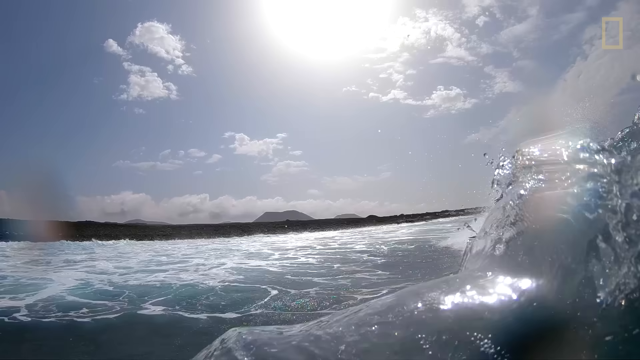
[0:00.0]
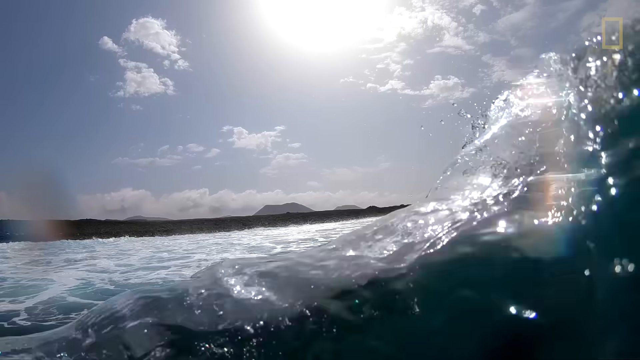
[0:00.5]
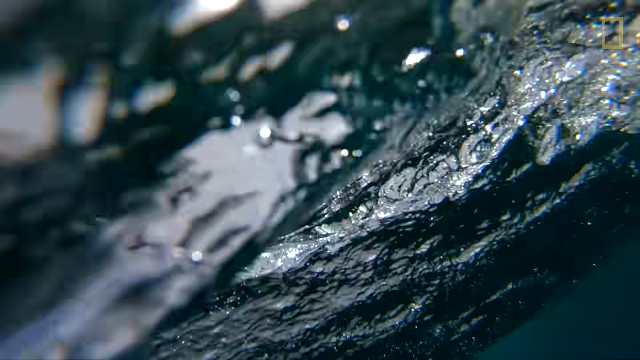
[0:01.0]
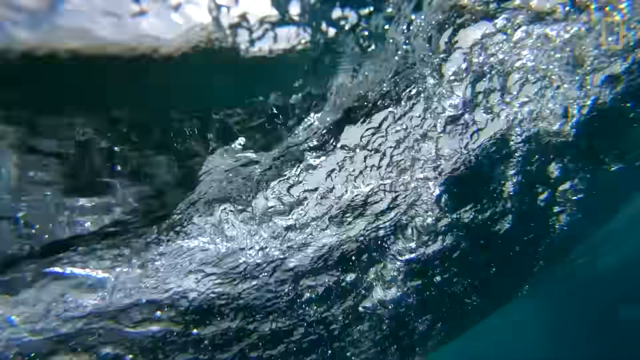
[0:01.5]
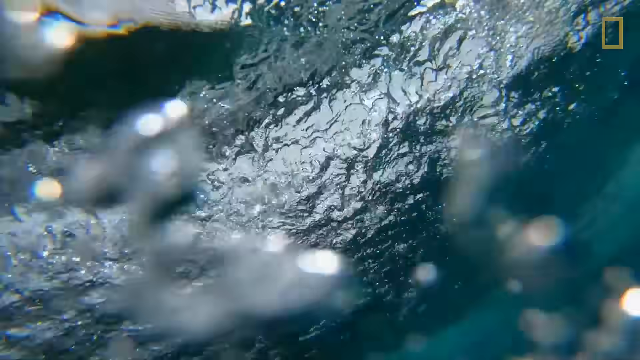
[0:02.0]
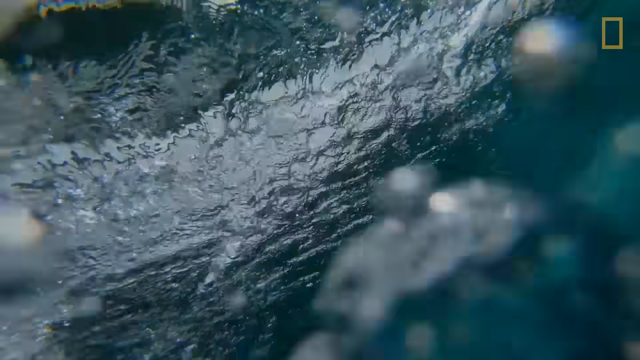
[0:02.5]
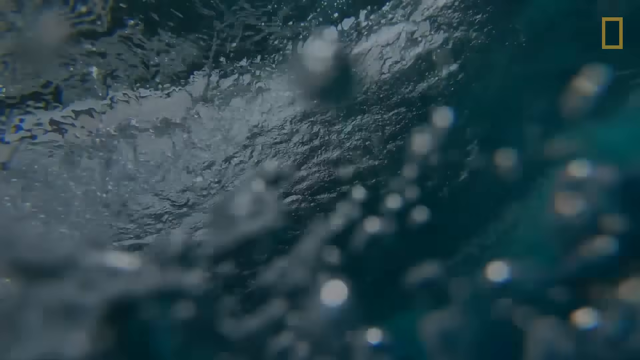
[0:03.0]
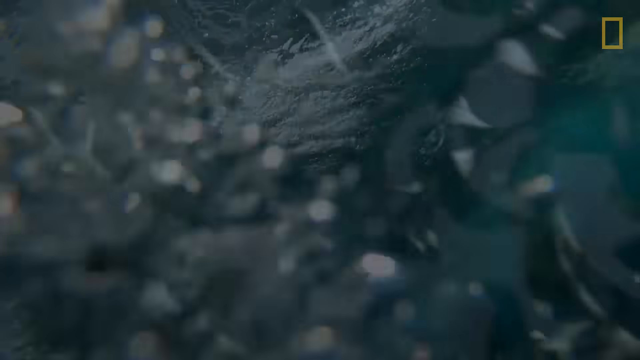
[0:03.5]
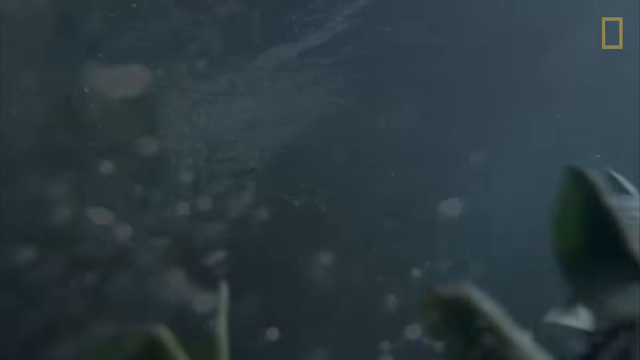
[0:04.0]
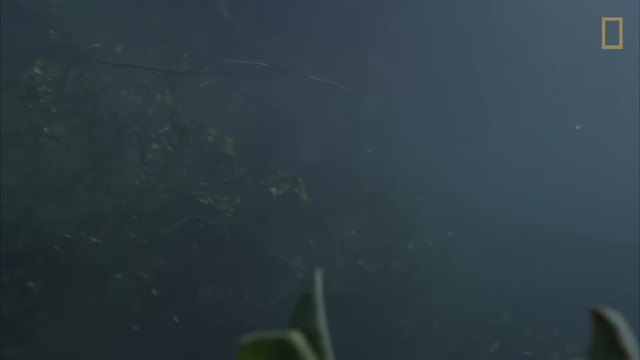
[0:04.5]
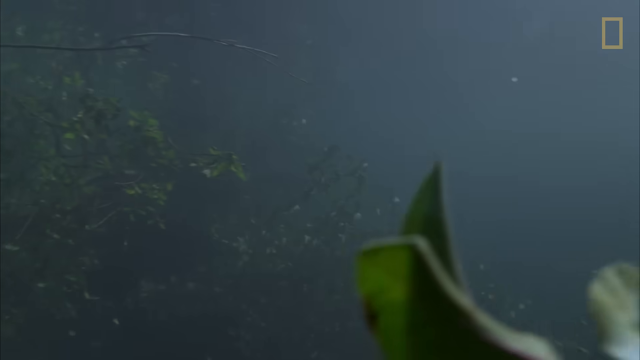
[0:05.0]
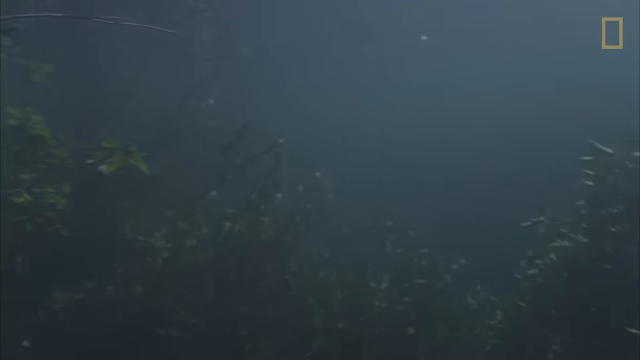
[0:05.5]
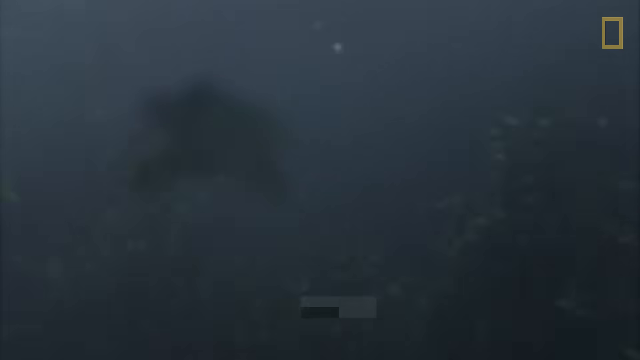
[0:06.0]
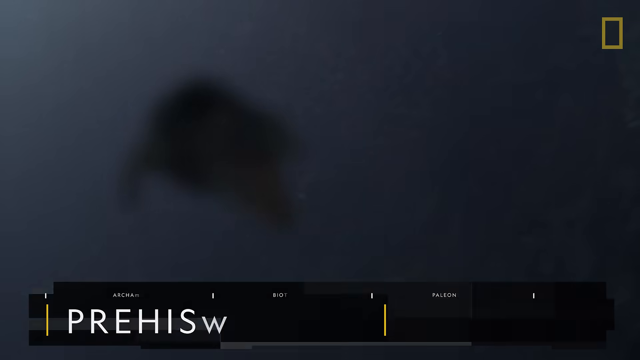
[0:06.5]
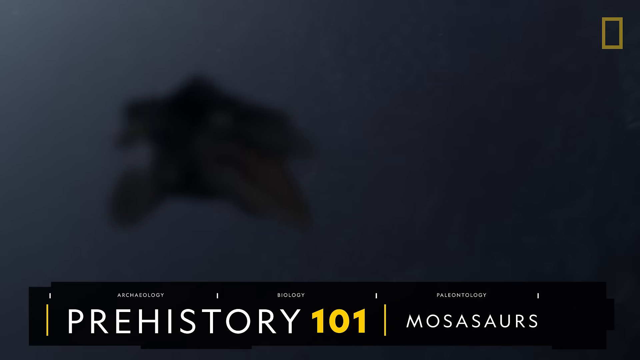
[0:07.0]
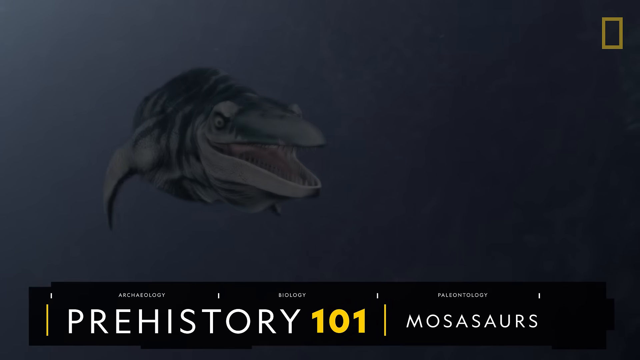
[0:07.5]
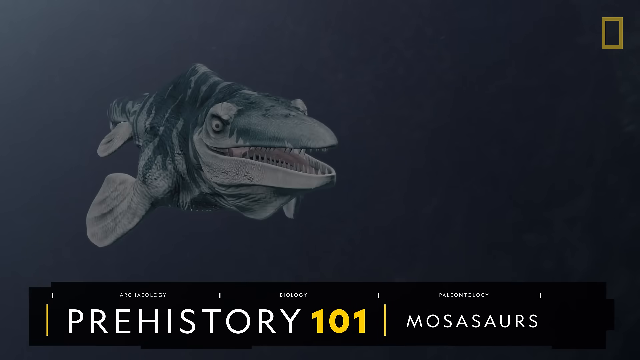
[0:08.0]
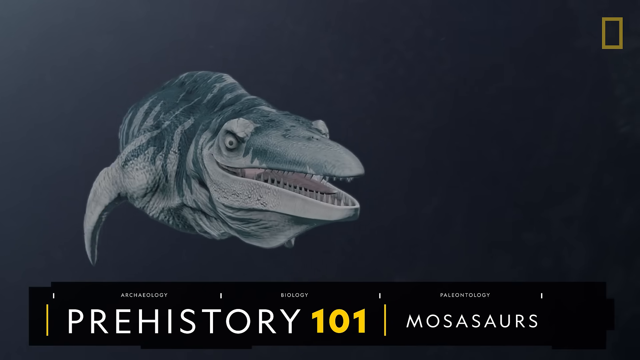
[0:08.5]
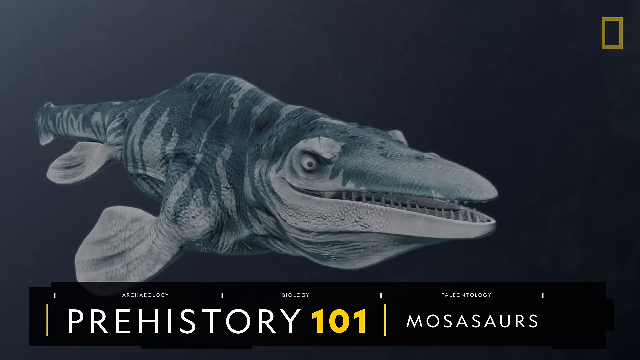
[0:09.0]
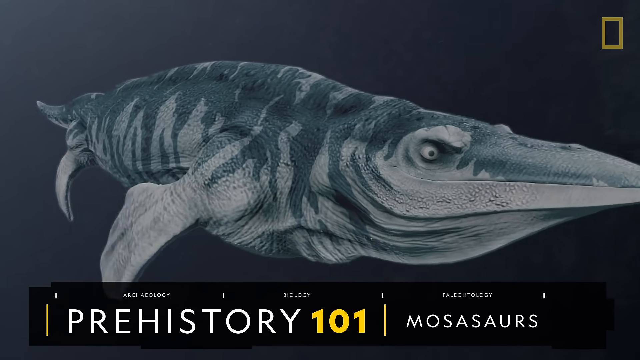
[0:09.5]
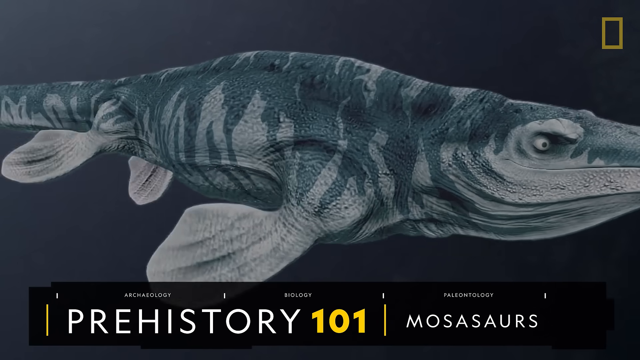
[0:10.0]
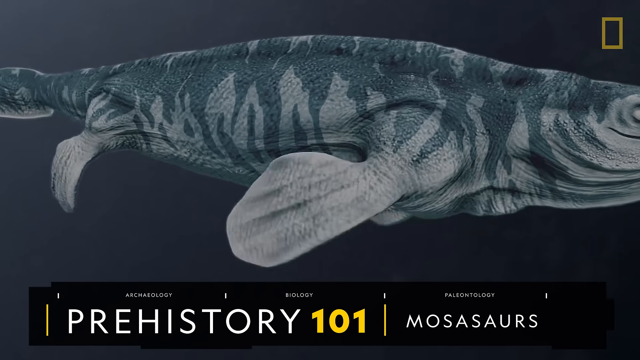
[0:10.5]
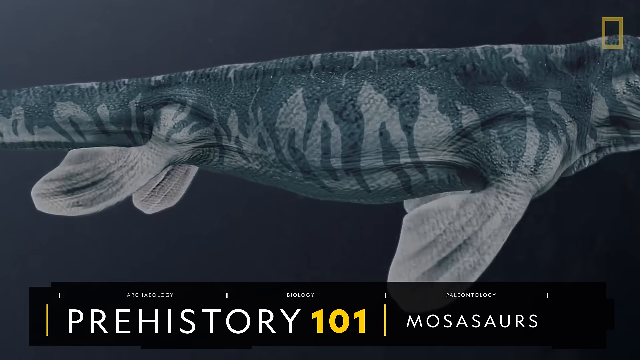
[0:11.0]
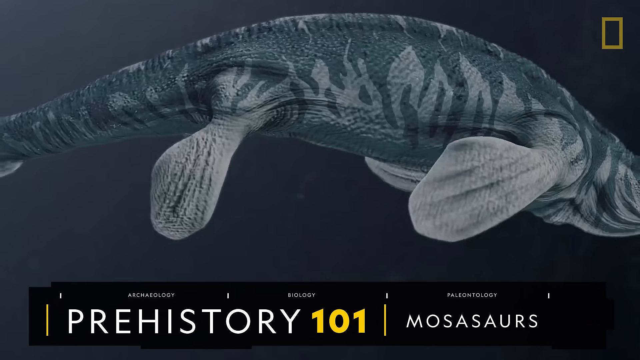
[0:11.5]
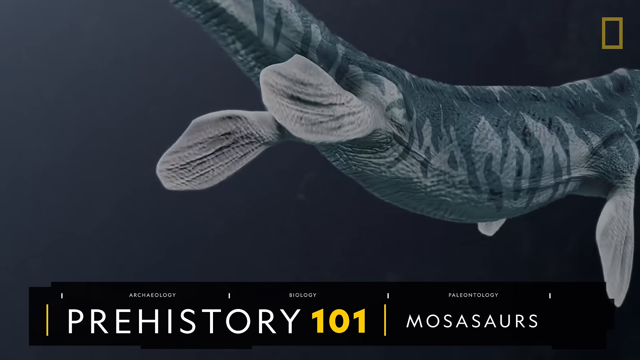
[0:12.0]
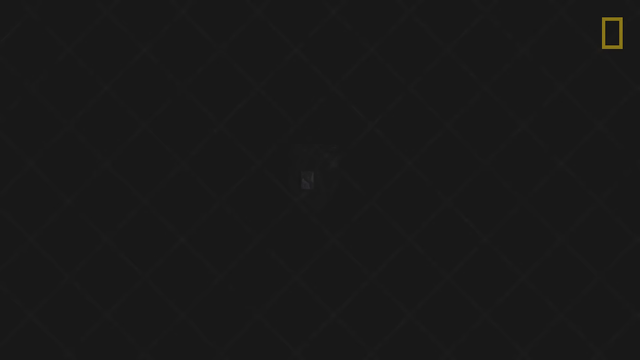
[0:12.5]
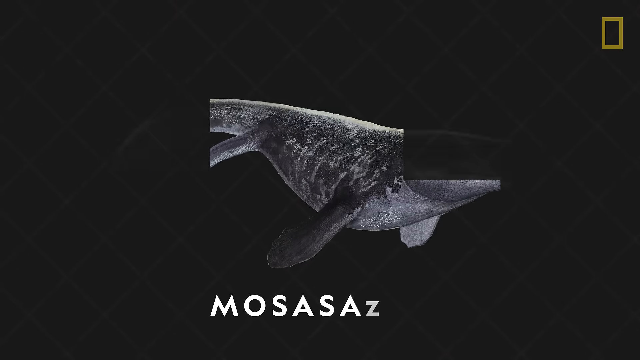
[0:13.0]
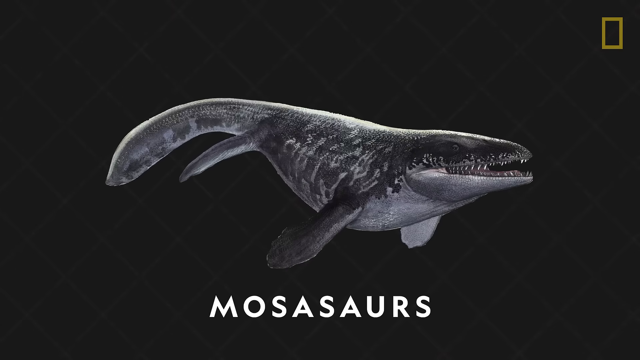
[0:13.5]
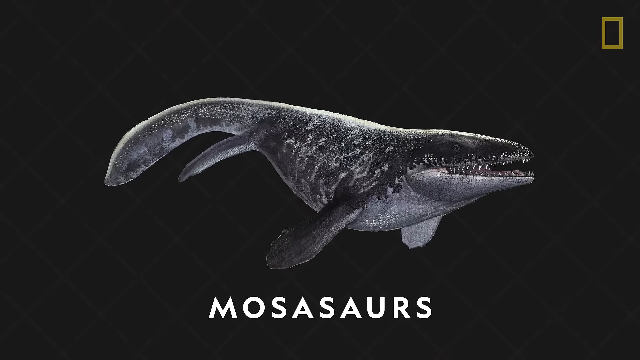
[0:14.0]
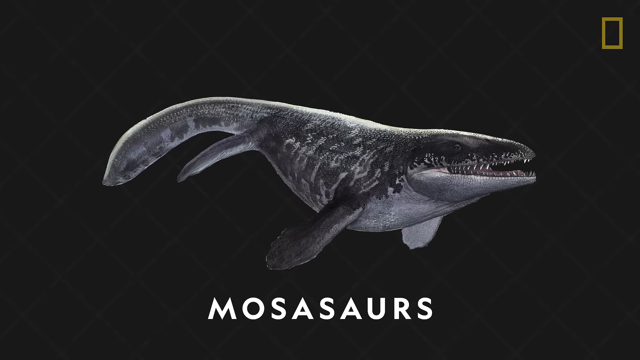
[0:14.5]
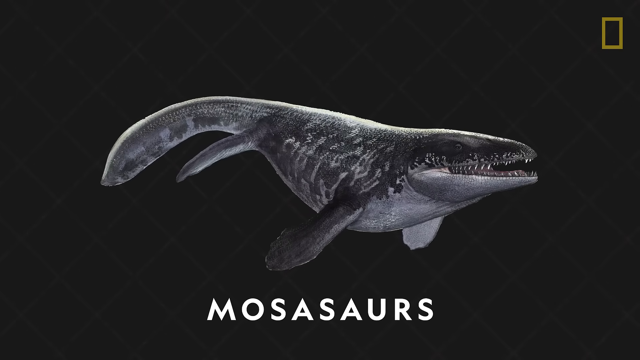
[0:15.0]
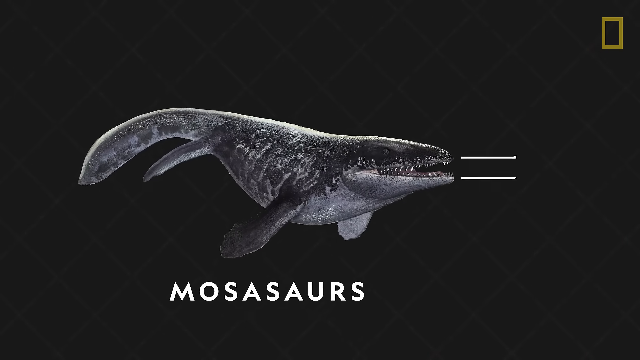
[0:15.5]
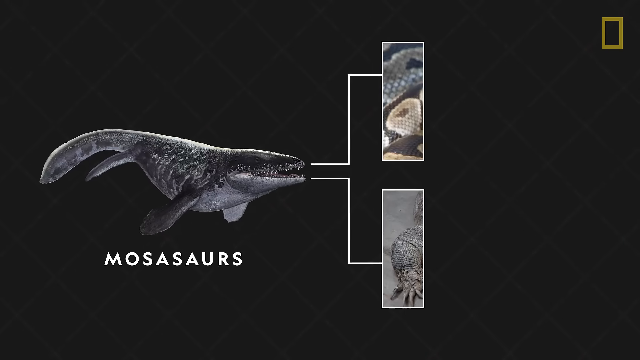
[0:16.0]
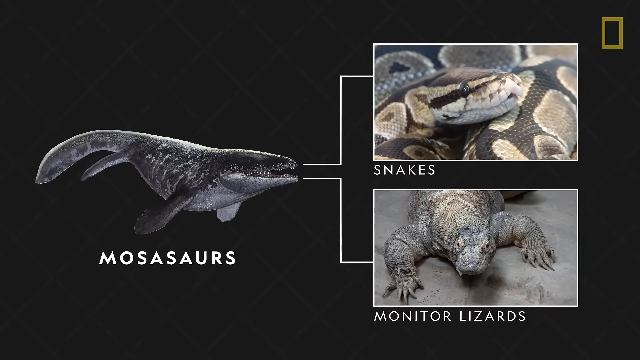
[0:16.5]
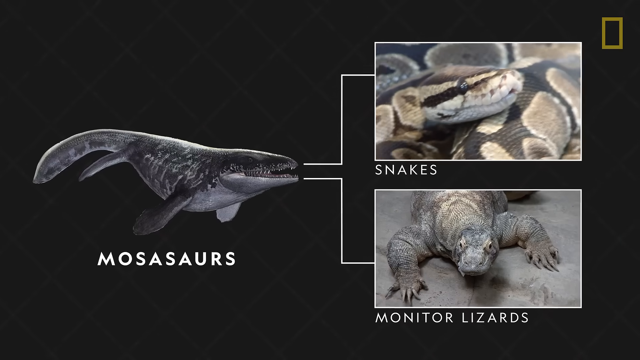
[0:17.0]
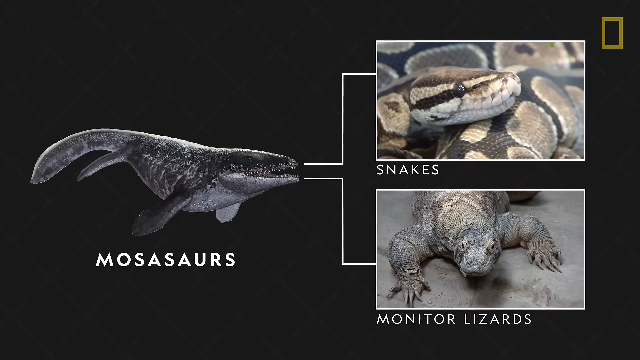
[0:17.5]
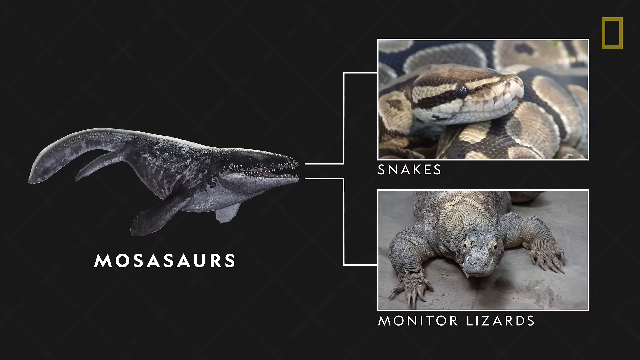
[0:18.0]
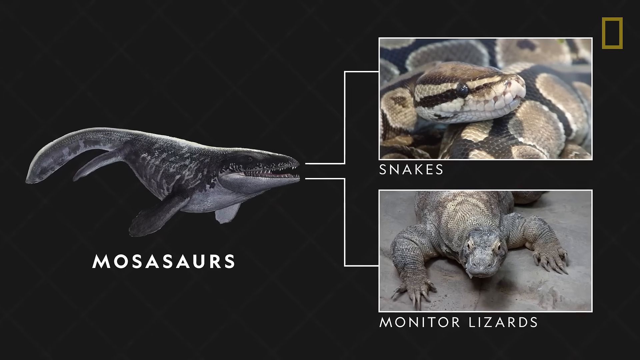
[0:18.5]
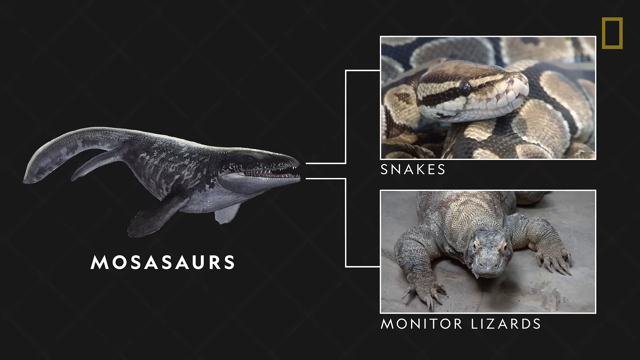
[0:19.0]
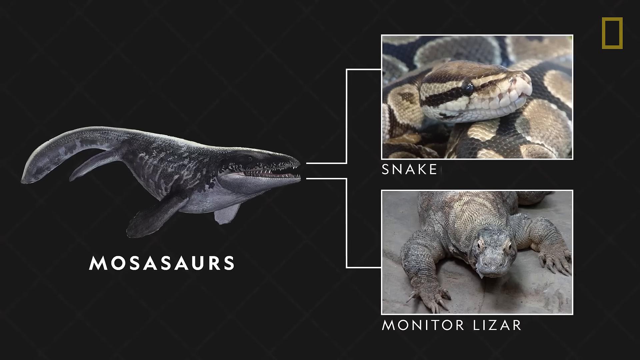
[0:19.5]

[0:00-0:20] The video appears to show ocean scenes, with pictures taken underwater. An ocean wave is visible, and it is a very bright day.